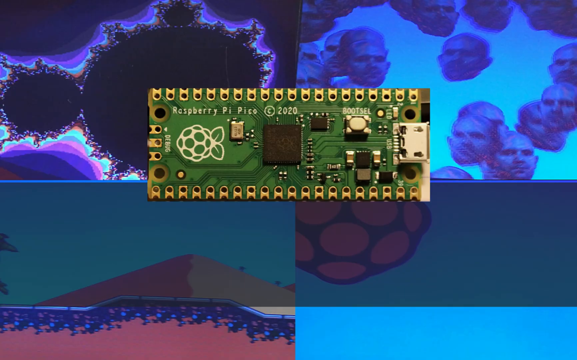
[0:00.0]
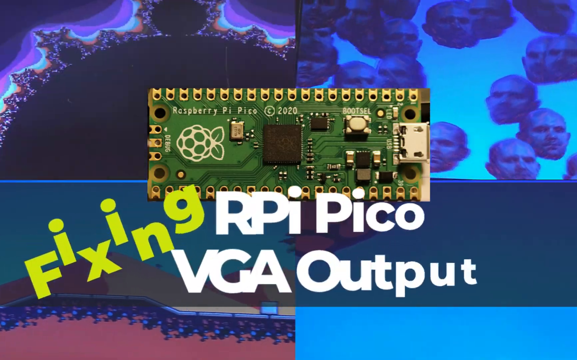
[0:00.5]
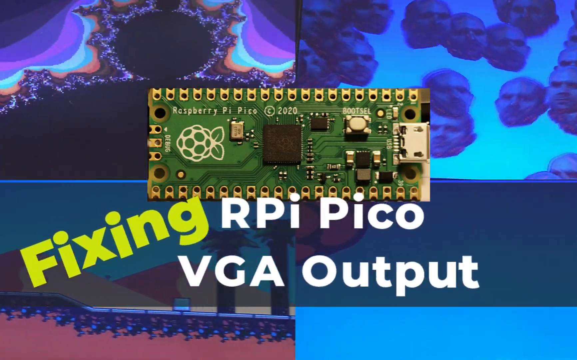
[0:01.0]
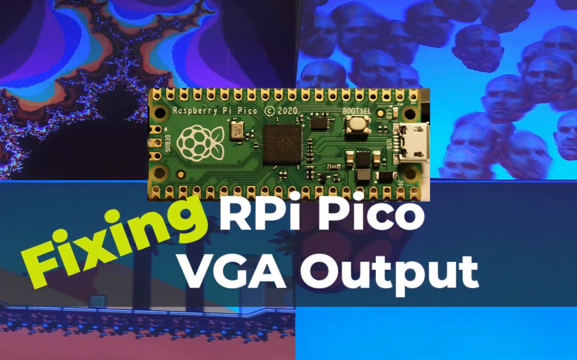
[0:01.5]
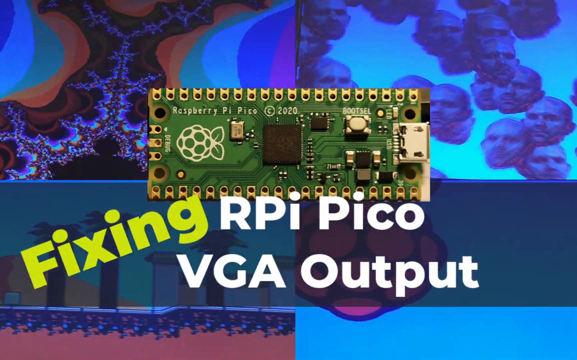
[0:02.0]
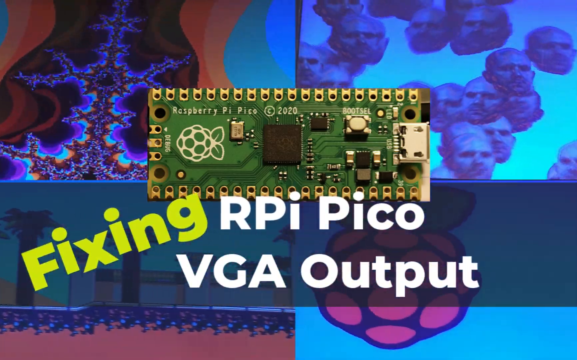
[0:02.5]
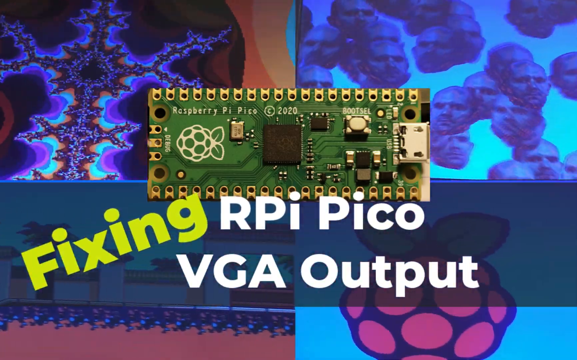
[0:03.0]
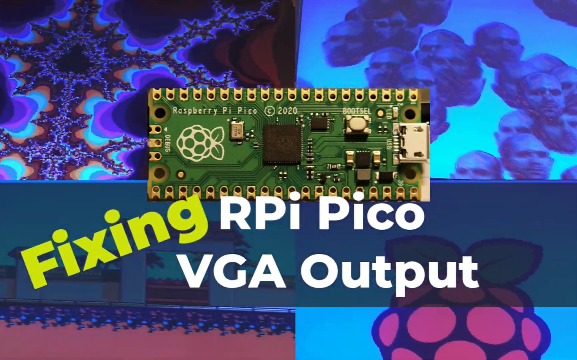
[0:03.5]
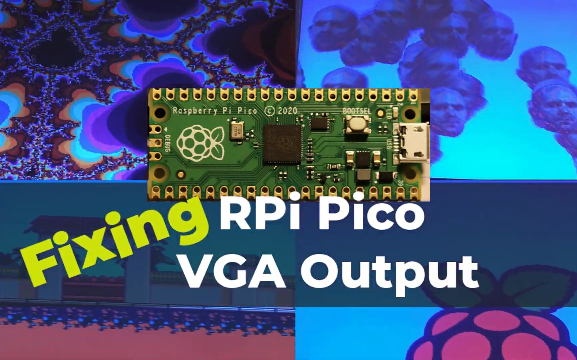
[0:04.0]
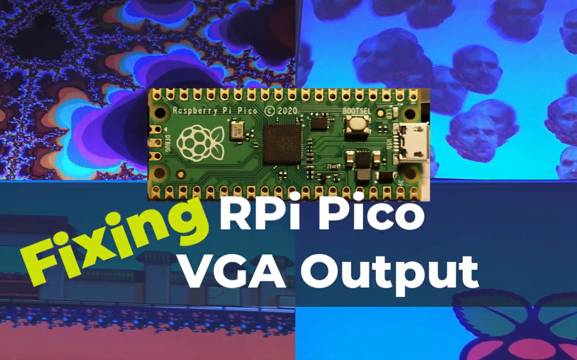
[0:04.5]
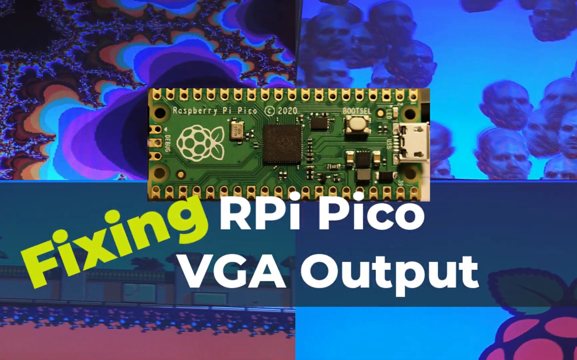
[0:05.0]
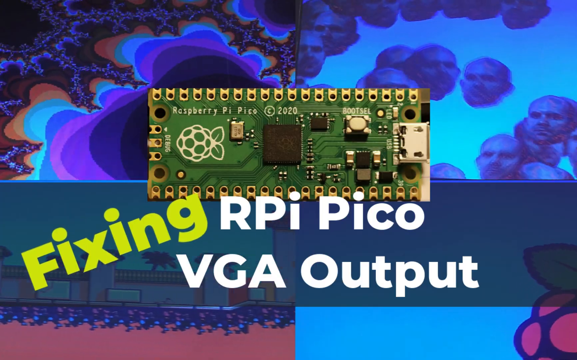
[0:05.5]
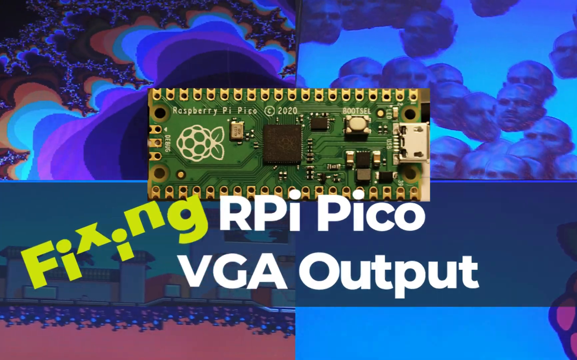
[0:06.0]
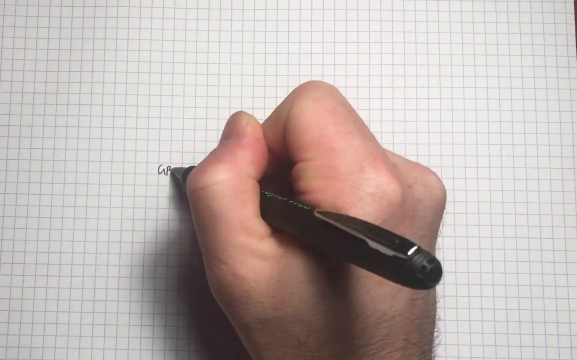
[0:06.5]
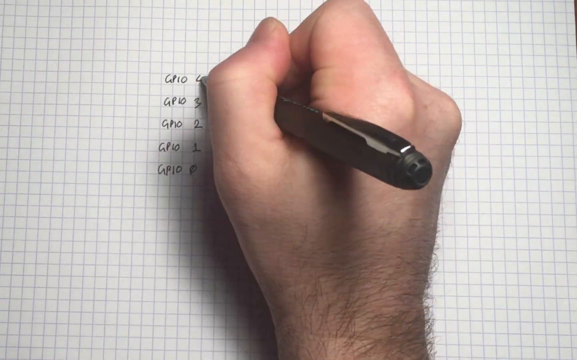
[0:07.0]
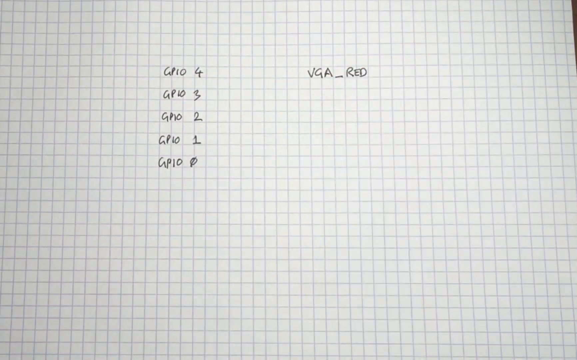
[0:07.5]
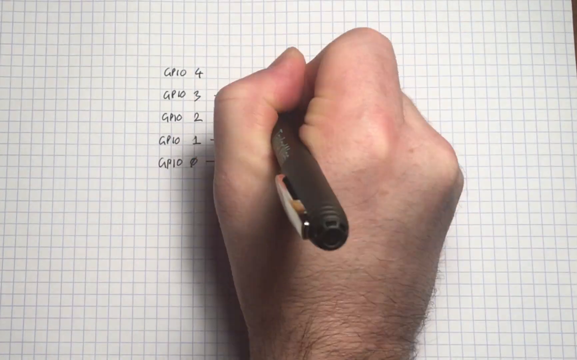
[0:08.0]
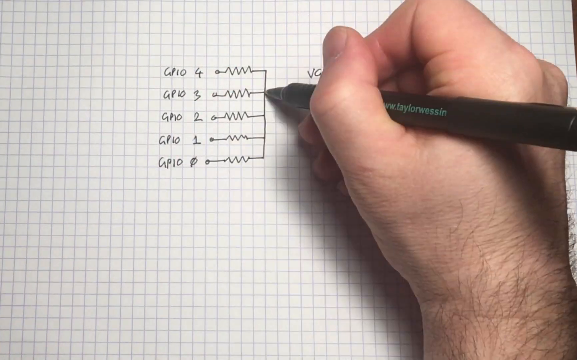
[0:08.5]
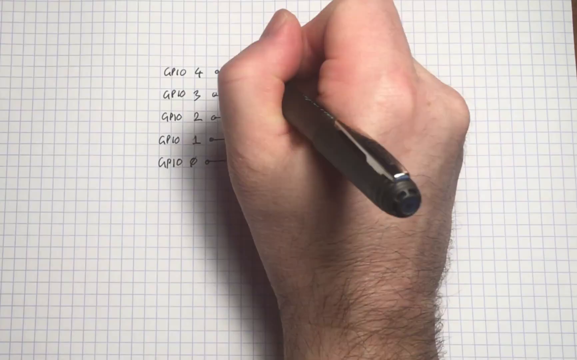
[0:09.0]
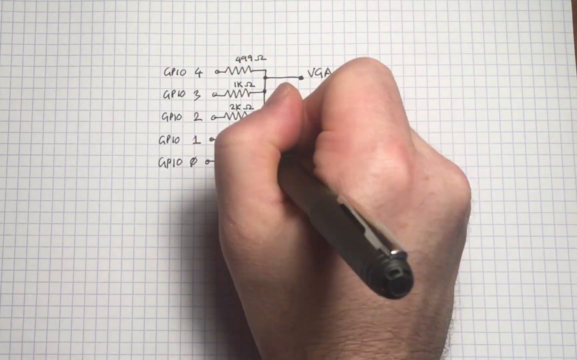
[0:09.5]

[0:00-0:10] The video begins with what looks like a PC monitor showing a screen saver that appears to be split into quarters. The upper left looks like cells under a microscope, and the right looks like a microscope. The upper part looks like dried fish. To the right, multiple heads of a man are suspended in nothingness. The bottom, on both the left and right sides, looks like a video game. The top half is mostly bluish, in shades of blue with a bit of purple. On the bottom left there are pale greens, and one image looks like a mountain with earth below. In the middle is a portion of a motherboard, with text beneath it that reads "fixing RPI Pico BGA output." The screen is in constant motion. The video then transitions to a sheet of paper and a person's hand holding a writing pen, writing constantly; the footage is sped up and fast.